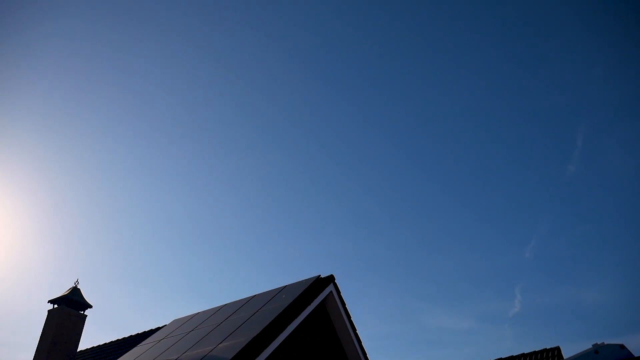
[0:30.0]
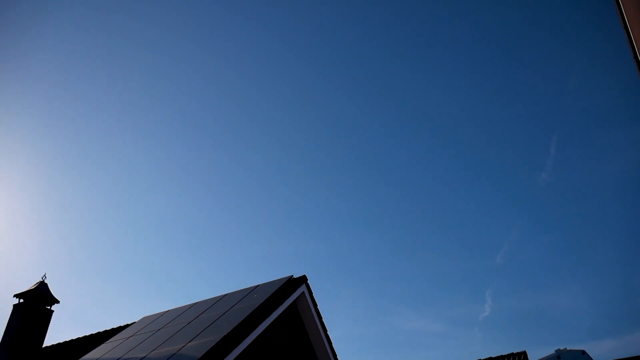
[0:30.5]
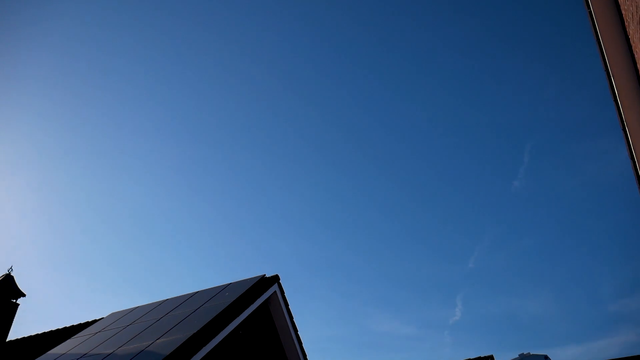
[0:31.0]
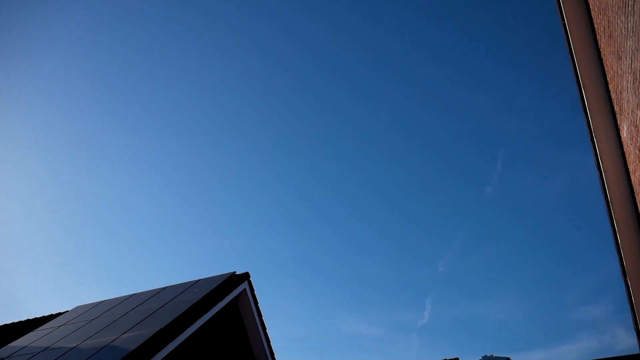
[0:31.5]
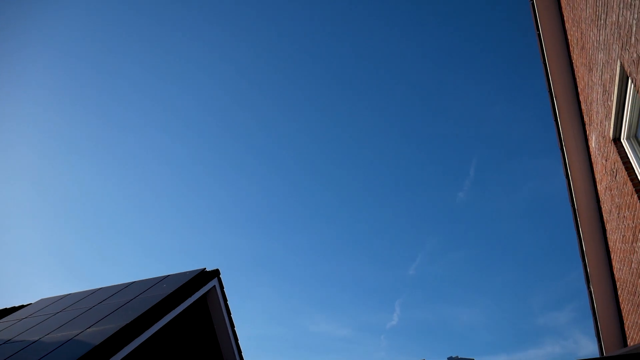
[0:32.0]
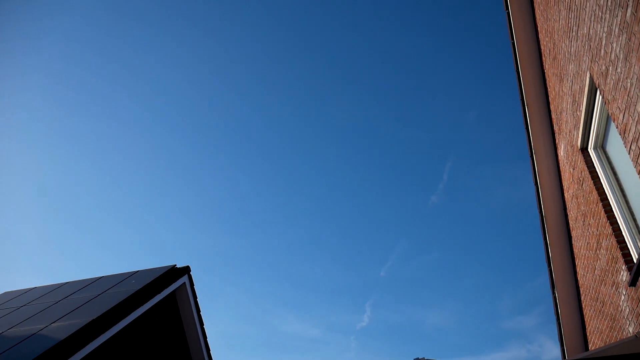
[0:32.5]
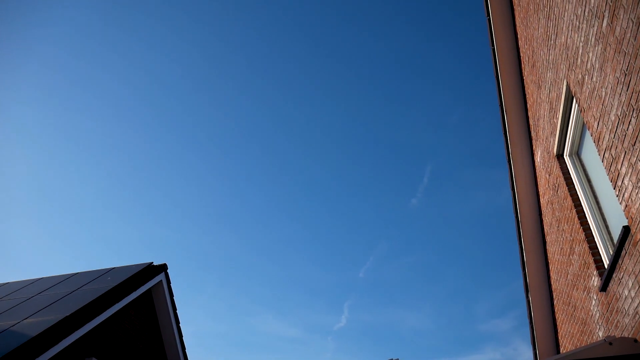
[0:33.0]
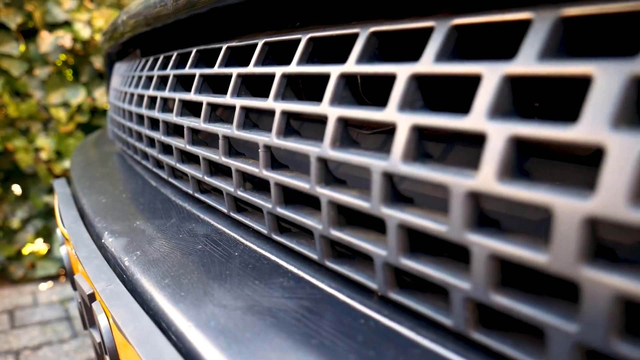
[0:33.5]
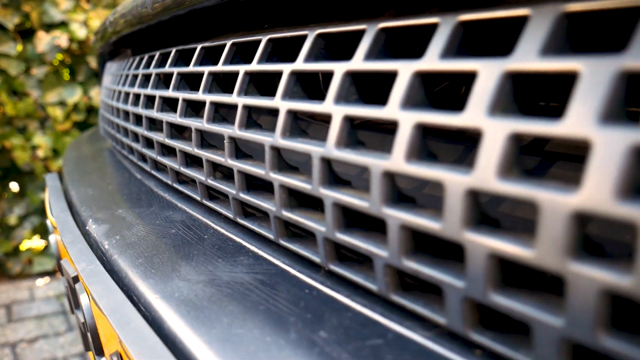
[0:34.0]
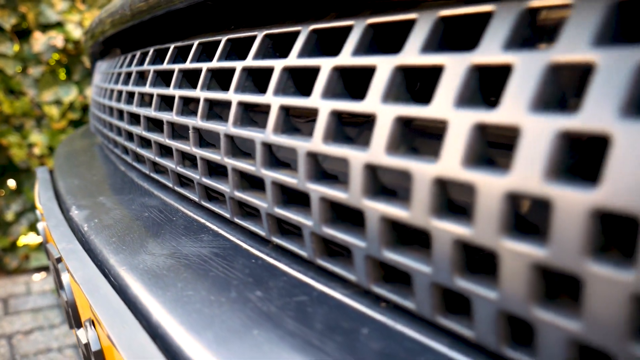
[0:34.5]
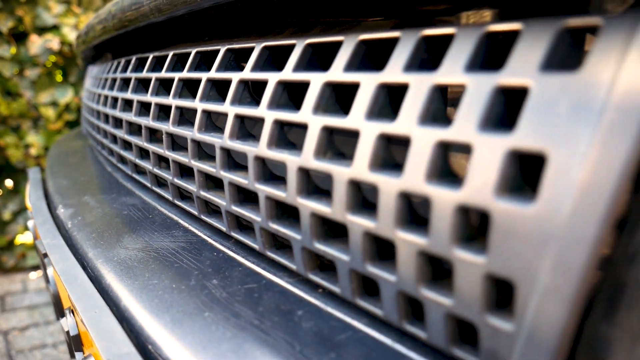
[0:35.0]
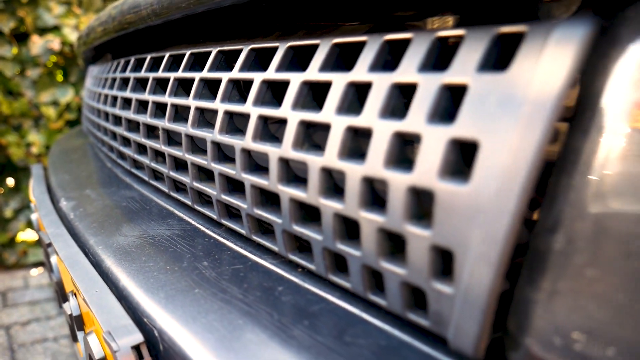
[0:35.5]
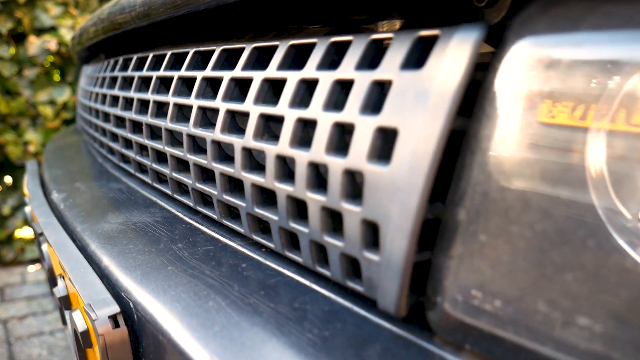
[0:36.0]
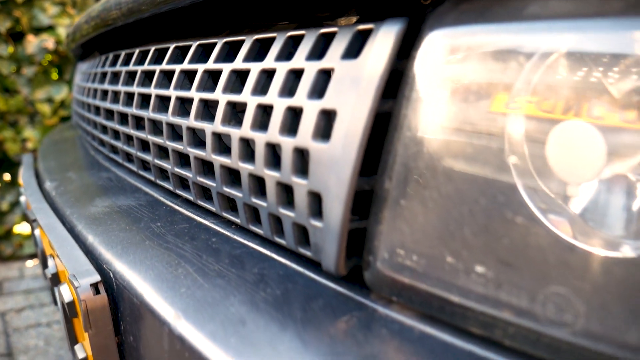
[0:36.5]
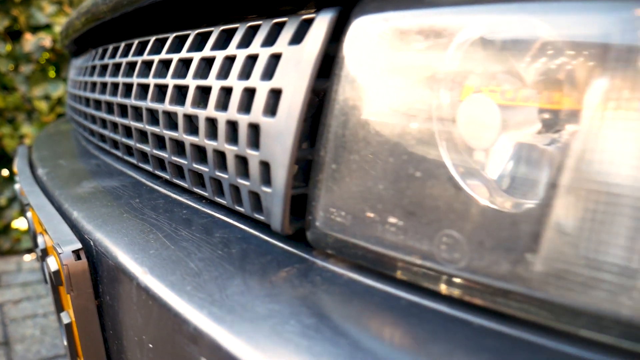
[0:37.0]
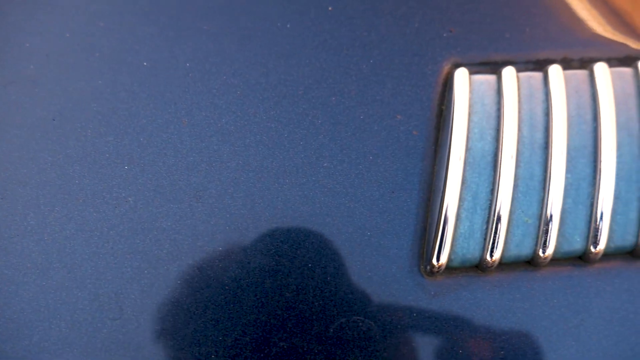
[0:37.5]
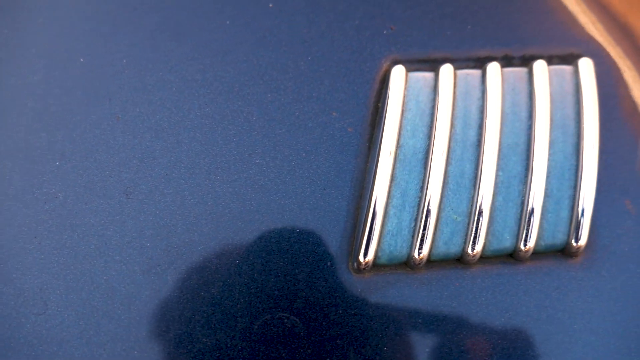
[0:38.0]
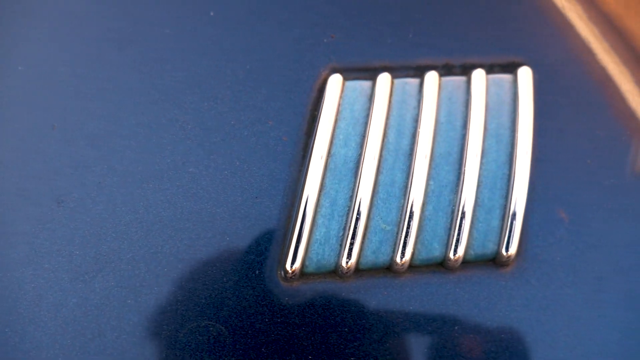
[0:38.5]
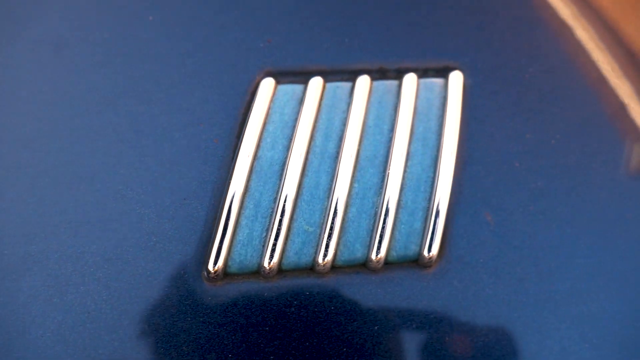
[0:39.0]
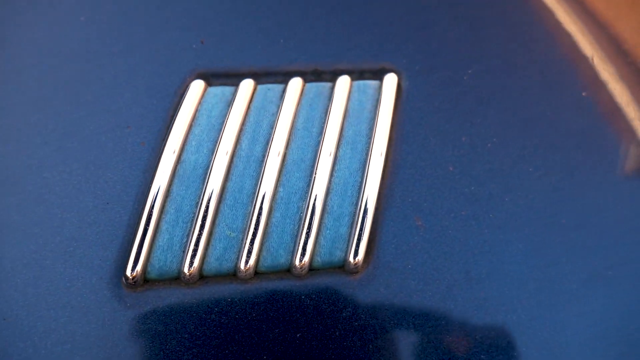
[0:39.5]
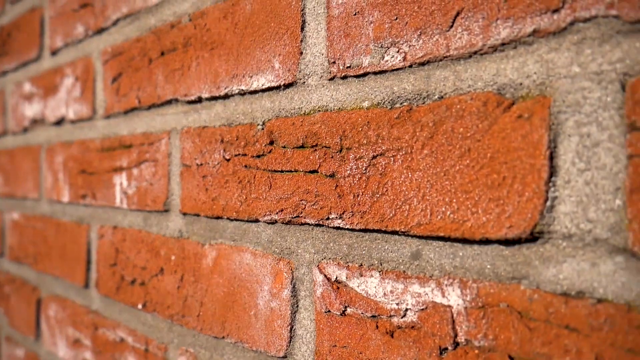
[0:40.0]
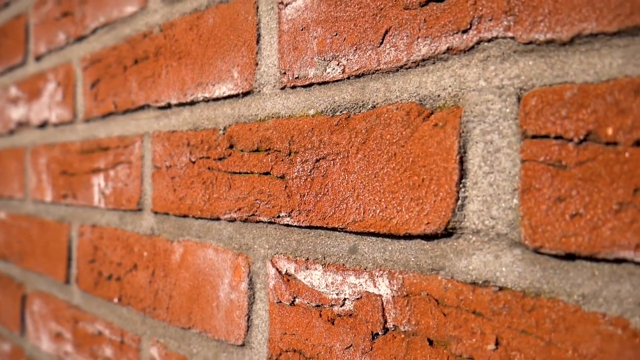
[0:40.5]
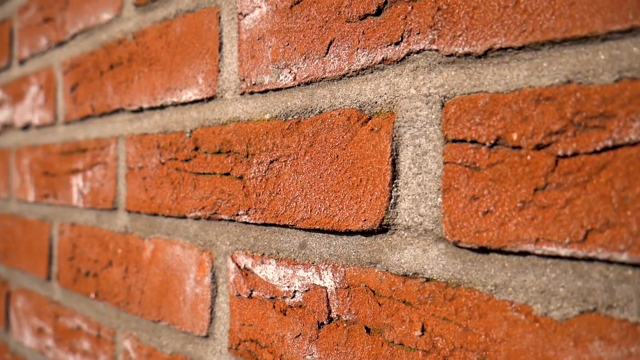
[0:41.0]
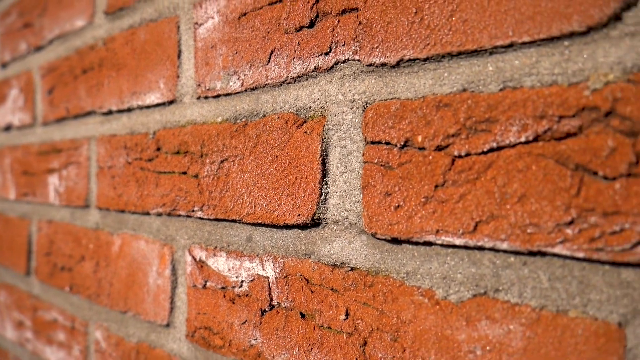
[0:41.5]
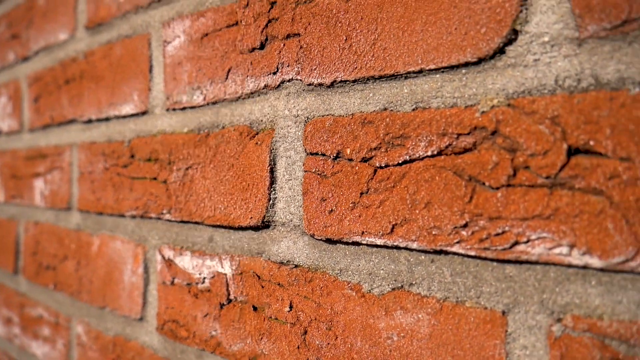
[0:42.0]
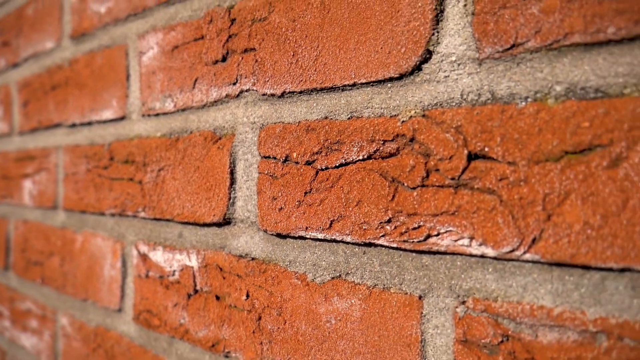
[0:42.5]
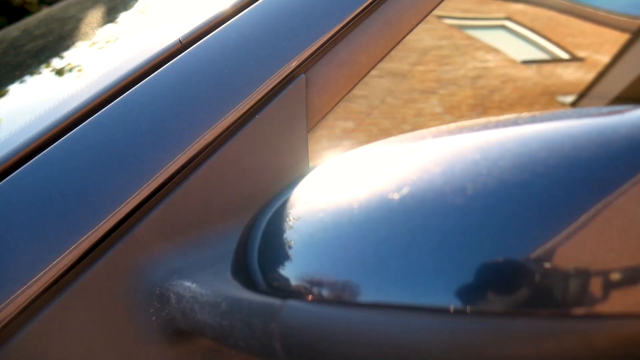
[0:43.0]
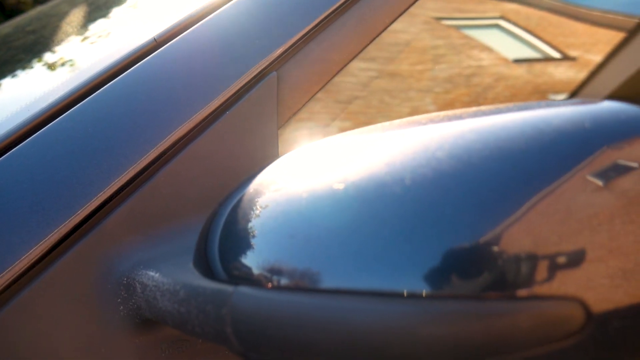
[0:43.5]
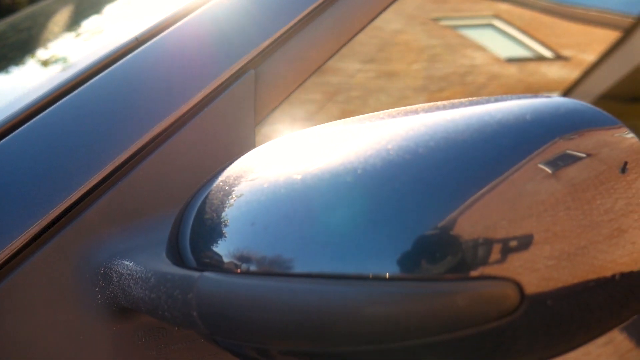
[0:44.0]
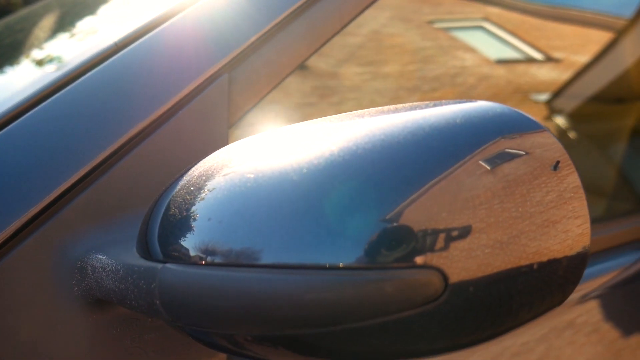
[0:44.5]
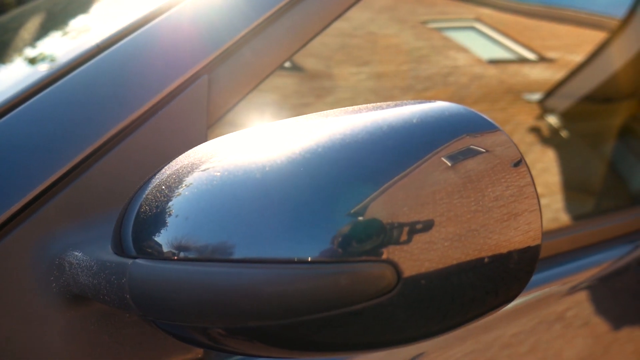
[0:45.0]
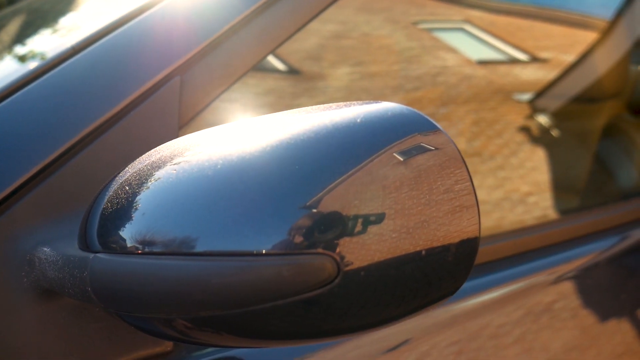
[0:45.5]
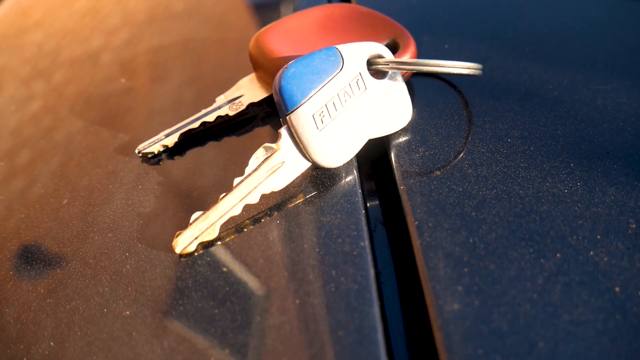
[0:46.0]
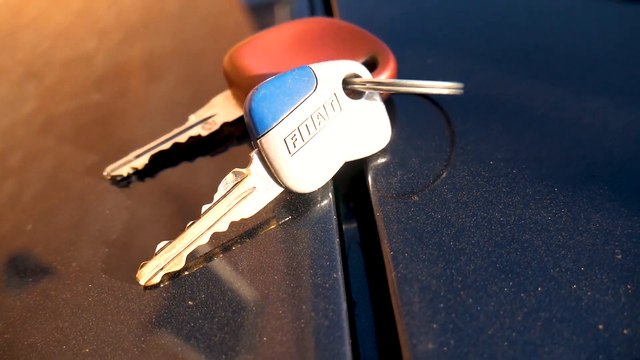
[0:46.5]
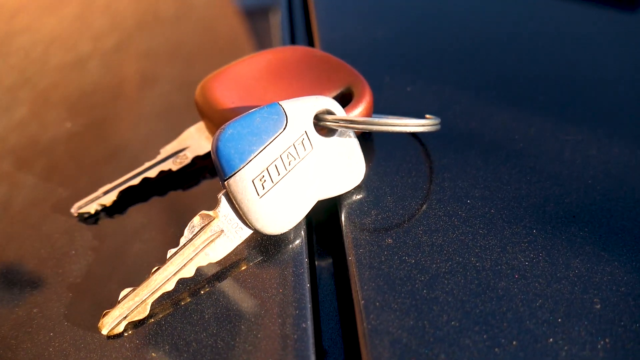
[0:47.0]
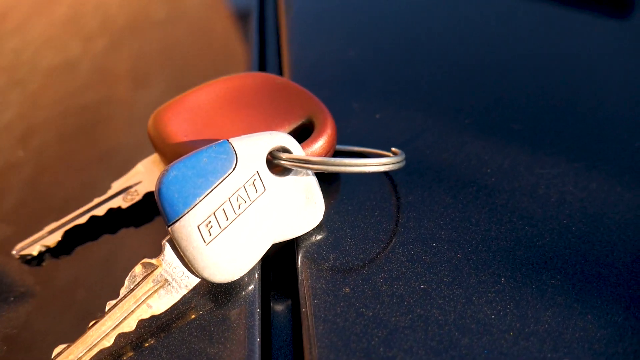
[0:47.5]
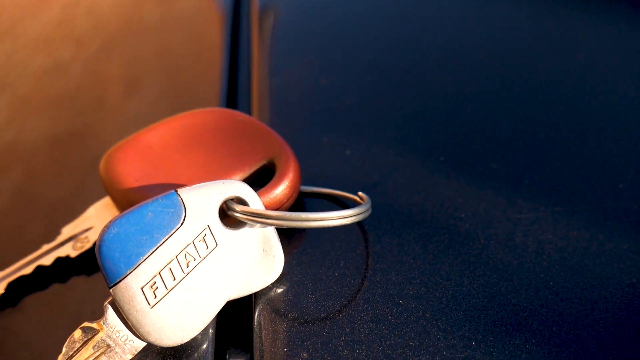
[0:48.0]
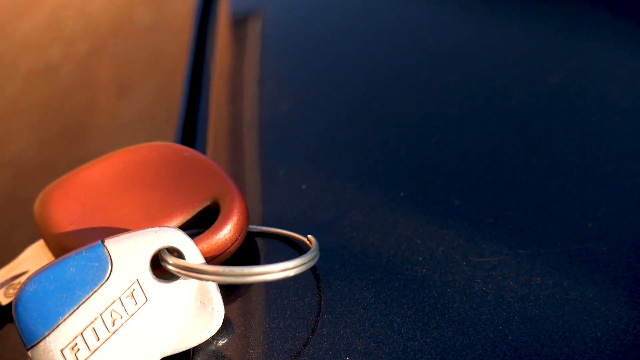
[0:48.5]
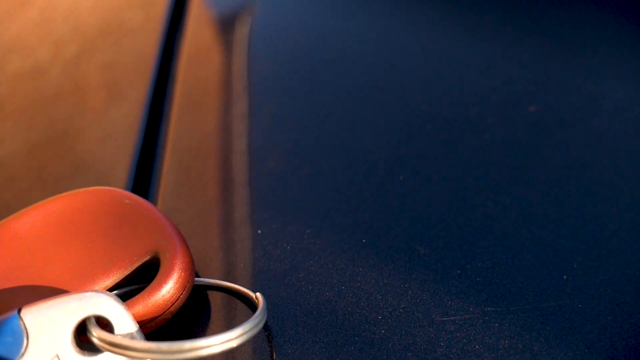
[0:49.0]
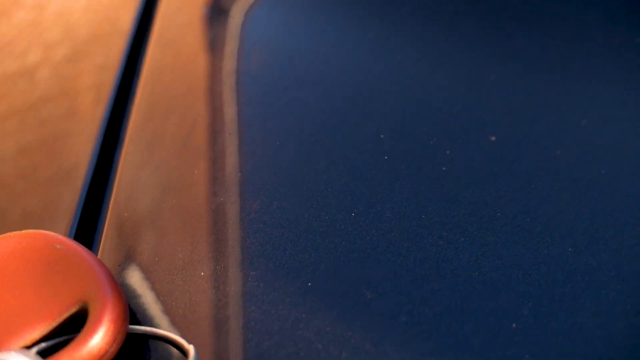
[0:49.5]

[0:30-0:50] A shot of a blue, sunny sky with barely any clouds shows the peaks of rooftops. The video then cuts to the grill of a vehicle that looks to be a taller one; the grill is silver with a bunch of squares cut into it. Next comes a close-up of emblems on the vehicle; the emblem has five lines with a roughly one-inch piece of blue sandwiched between each line, and it looks like it is on dark blue paint. Then there is a close-up of brick and the mortar in between, a close-up of a rearview mirror, and a close-up of keys, a red one and a white and blue one, with "fiat" on the key. Finally there is a close-up of an ivy wall.